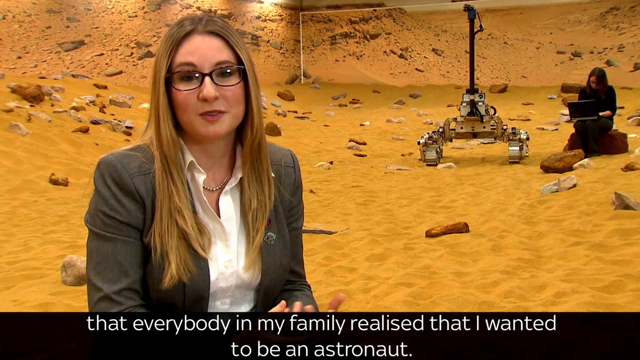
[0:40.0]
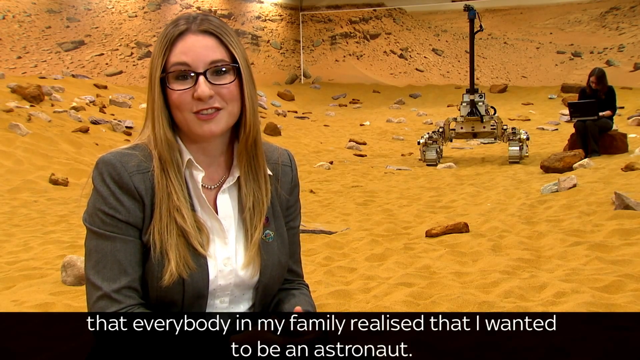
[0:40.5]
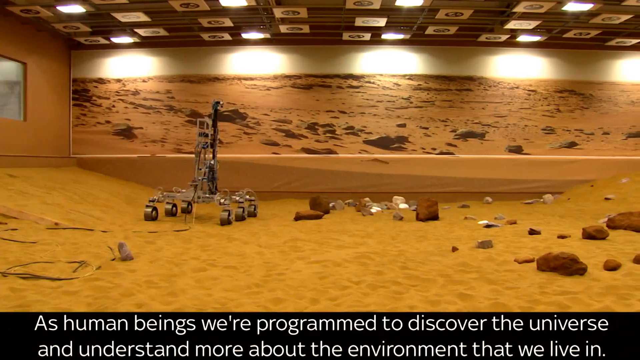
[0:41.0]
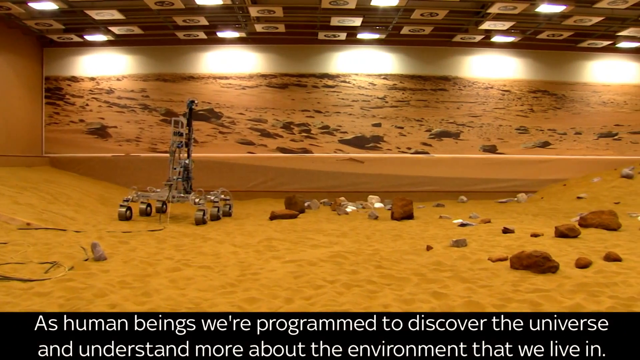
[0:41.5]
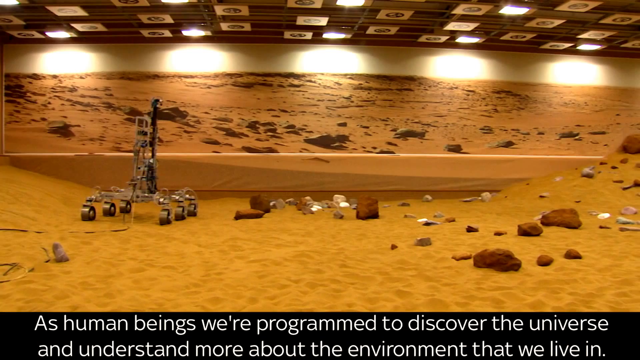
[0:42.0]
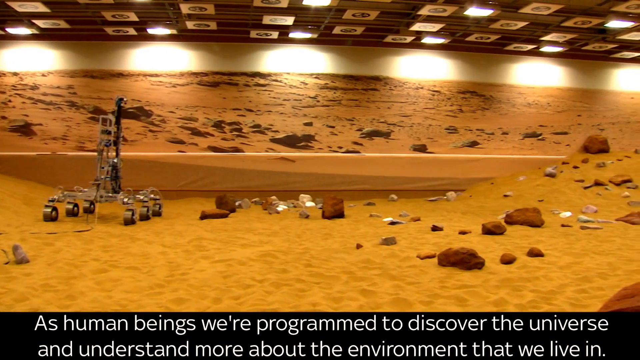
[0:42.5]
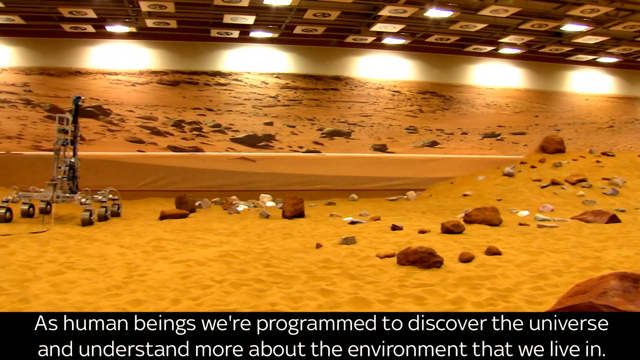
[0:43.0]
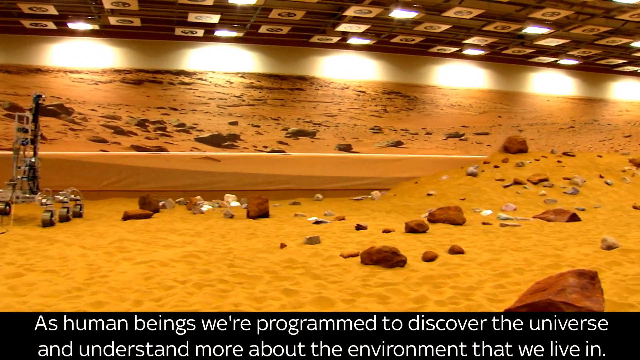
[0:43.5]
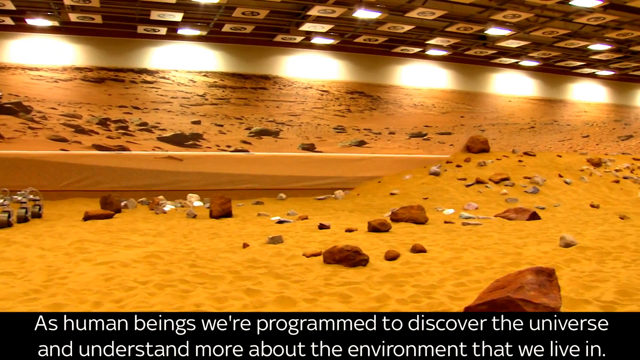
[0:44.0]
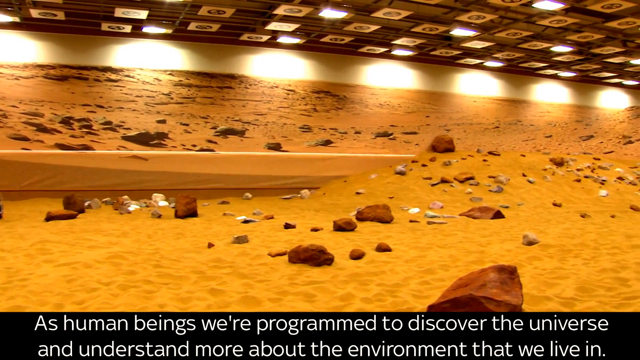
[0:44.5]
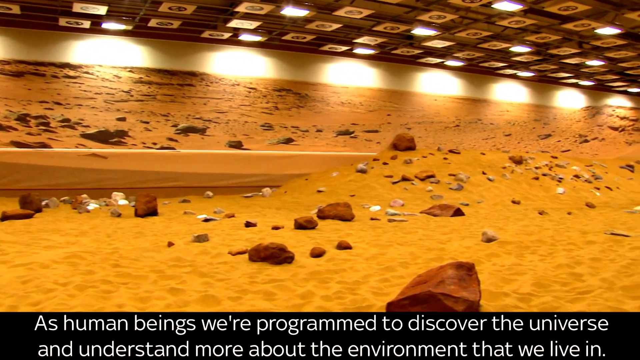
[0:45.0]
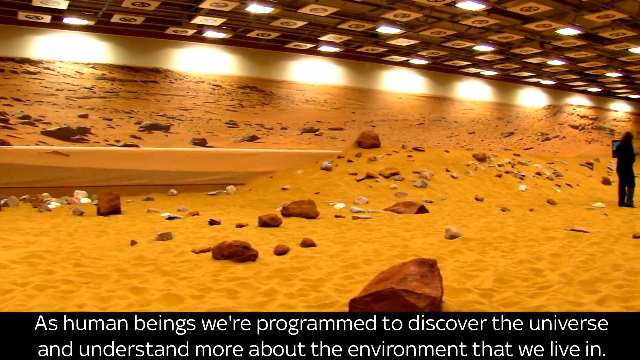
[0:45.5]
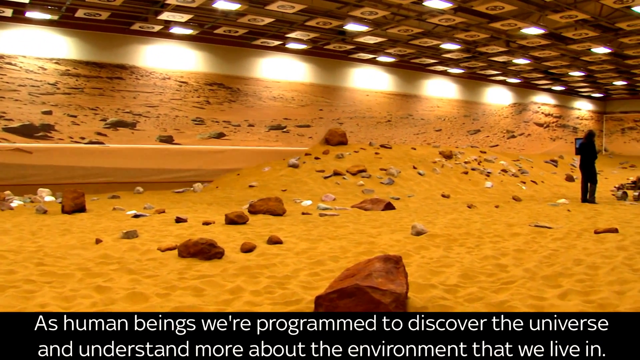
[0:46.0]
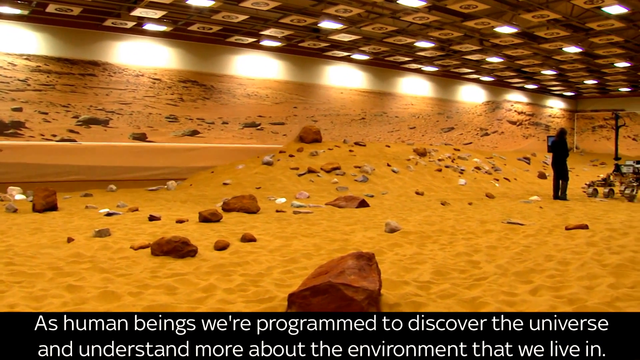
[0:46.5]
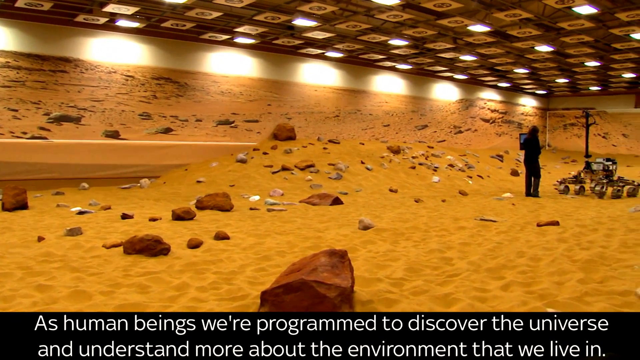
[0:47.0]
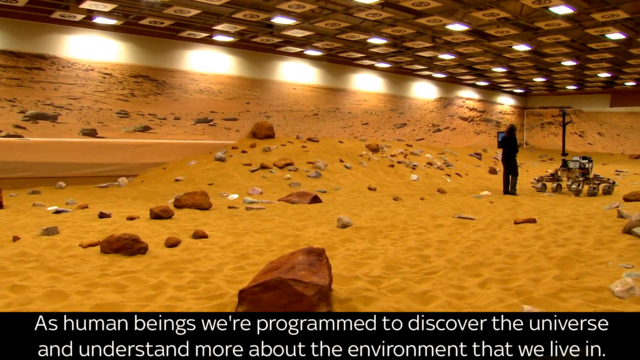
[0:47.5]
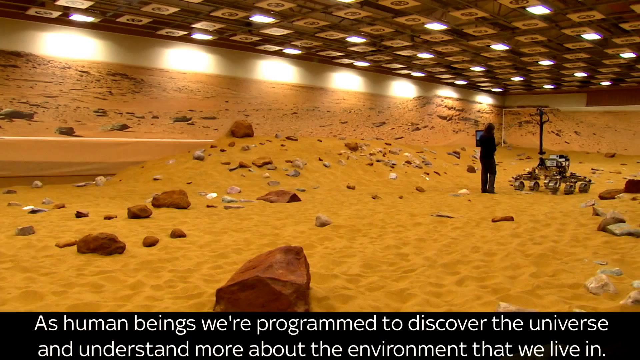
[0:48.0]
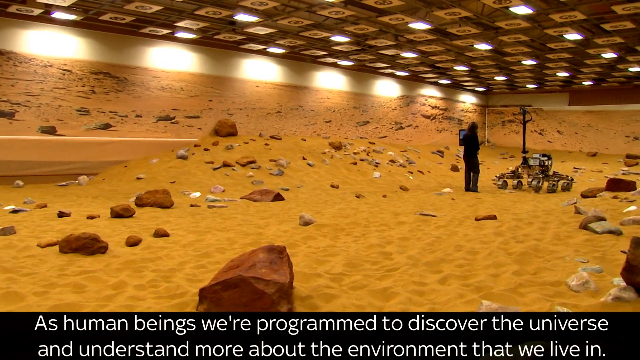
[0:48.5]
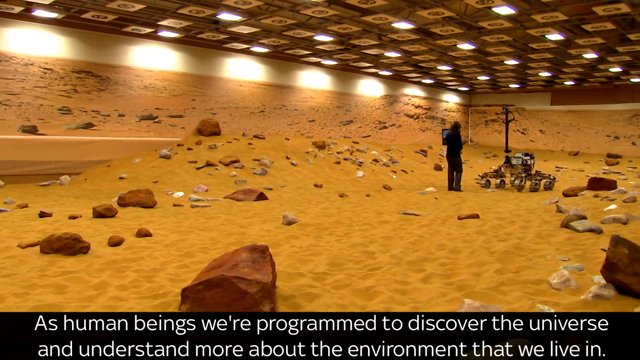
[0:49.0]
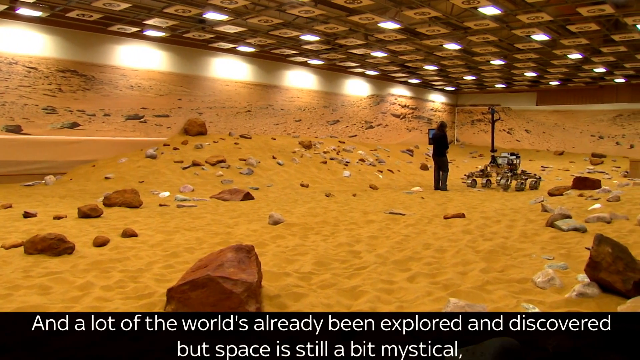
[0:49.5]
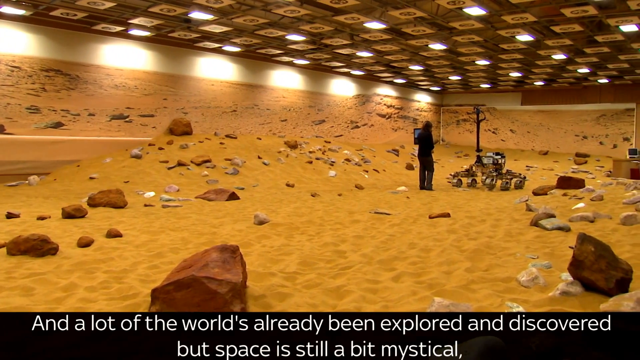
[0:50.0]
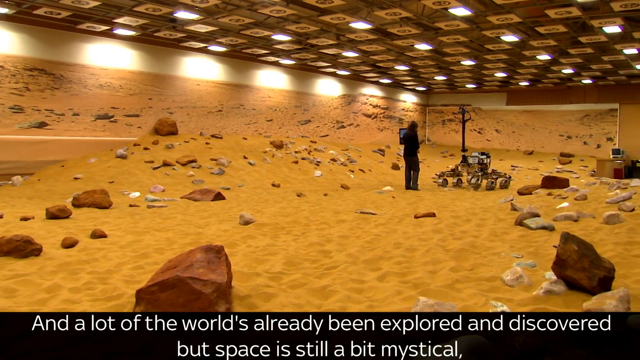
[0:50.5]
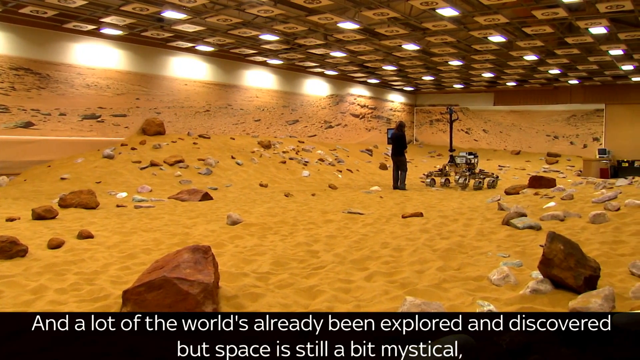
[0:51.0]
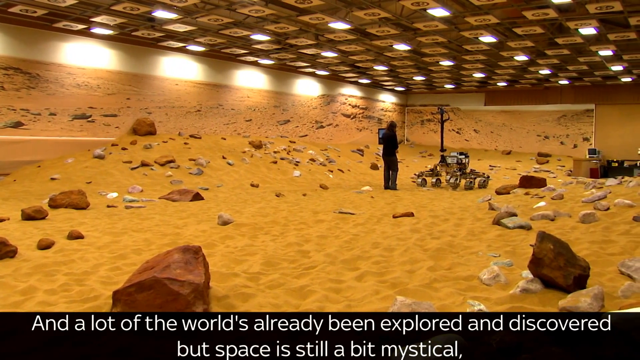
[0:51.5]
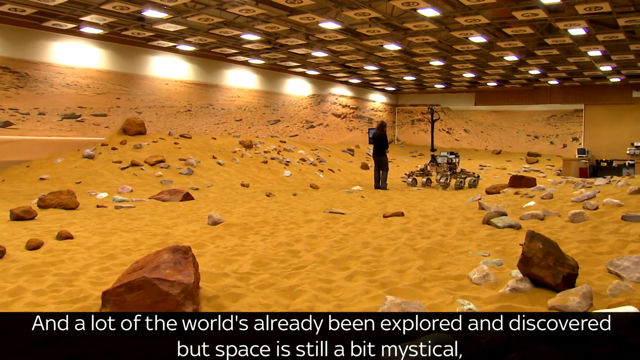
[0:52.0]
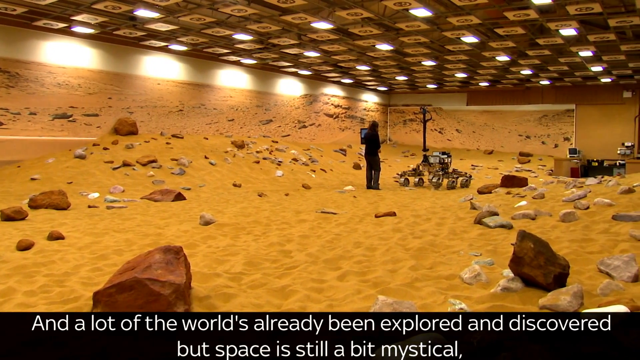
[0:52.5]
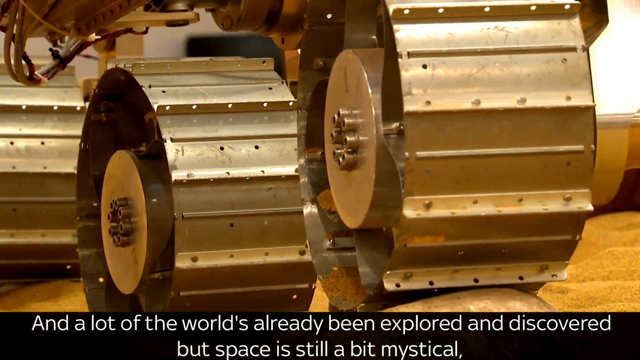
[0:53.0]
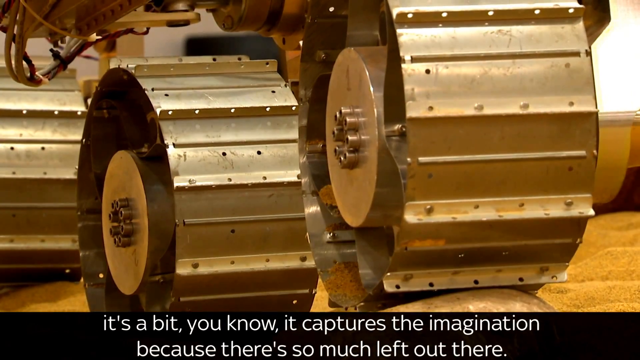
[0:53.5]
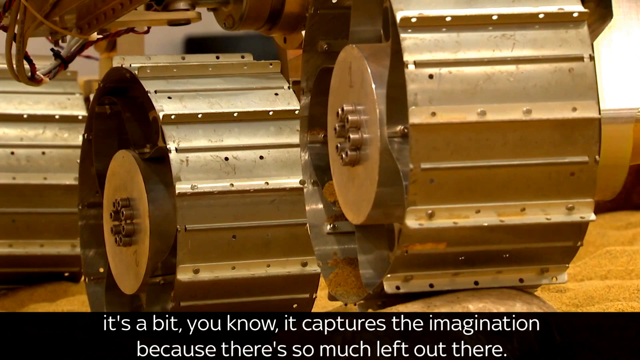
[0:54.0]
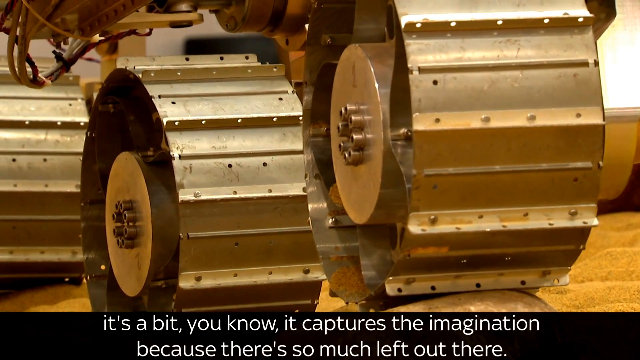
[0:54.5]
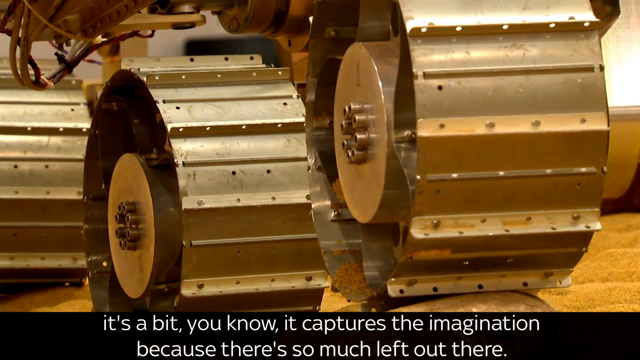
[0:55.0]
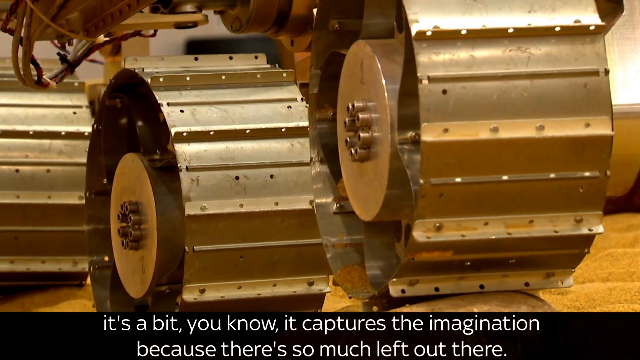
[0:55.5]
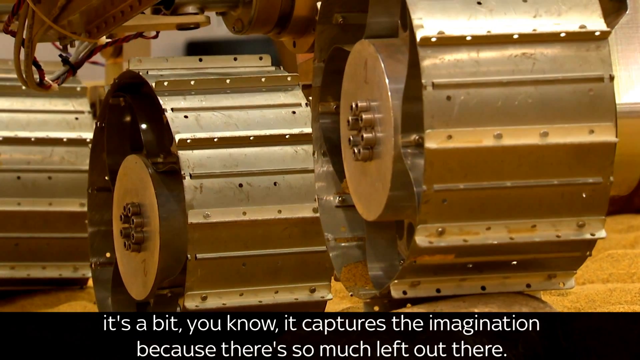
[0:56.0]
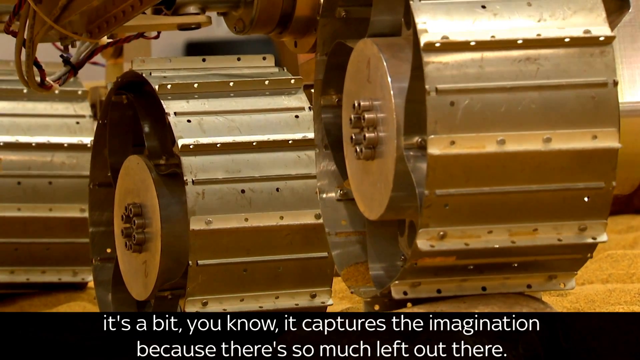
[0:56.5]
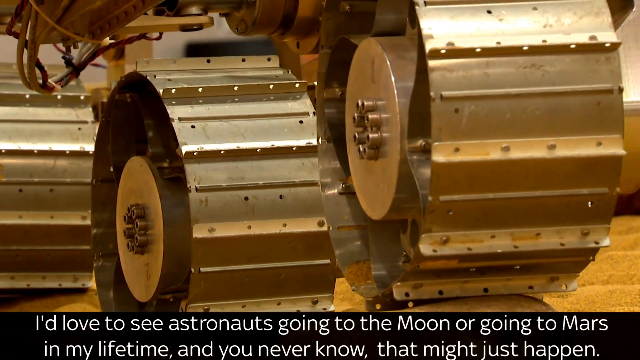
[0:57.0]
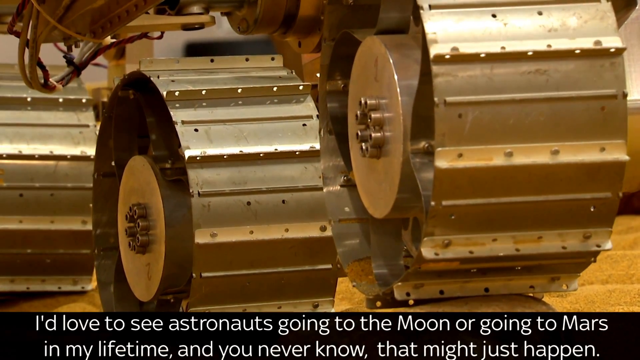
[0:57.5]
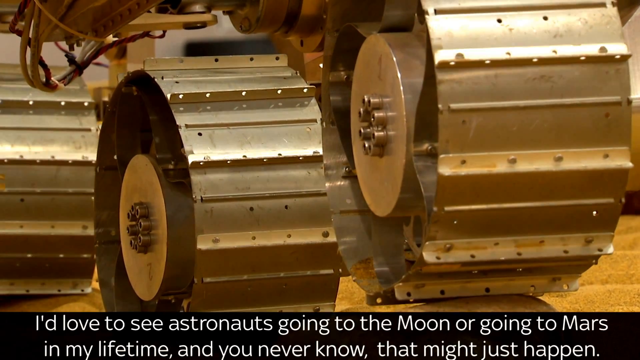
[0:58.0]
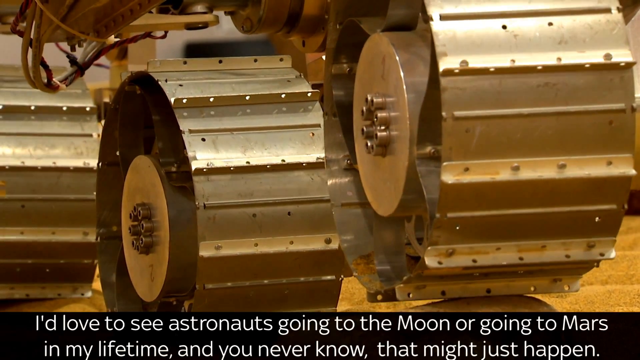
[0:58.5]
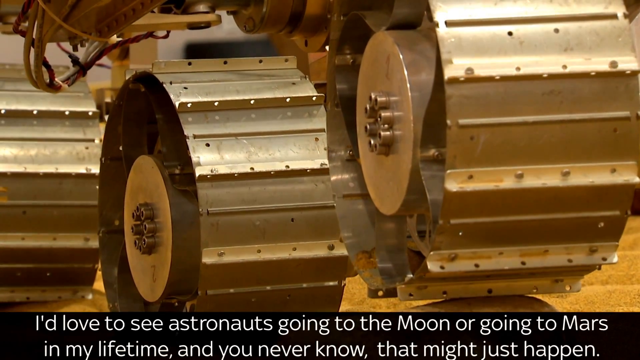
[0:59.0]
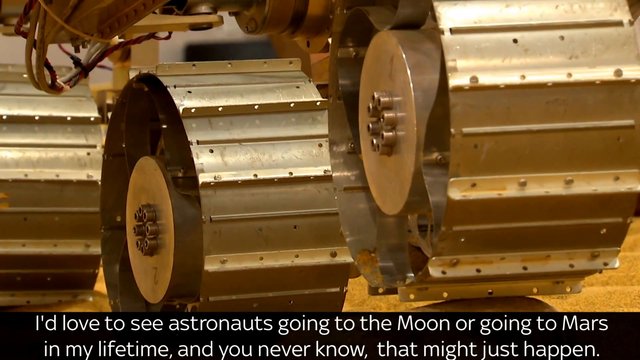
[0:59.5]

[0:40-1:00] The woman continues speaking into the camera. The video quickly transitions to a side view of a massive room with an almost sand-like ground; the floor starts low and scales up almost all the way to the ceiling. There are rocks throughout, and the camera scans left to right. A person comes into view on the right side: she wears dark clothes, appears to have dark hair, and seems to be holding a laptop in her left hand. The camera keeps scanning to the right, showing more rocks; most are brown, but a couple are light colored, almost white, and they are all different sizes. The video then moves to a shot of the metal wheels, which are moving clockwise very slowly, all at the same time.